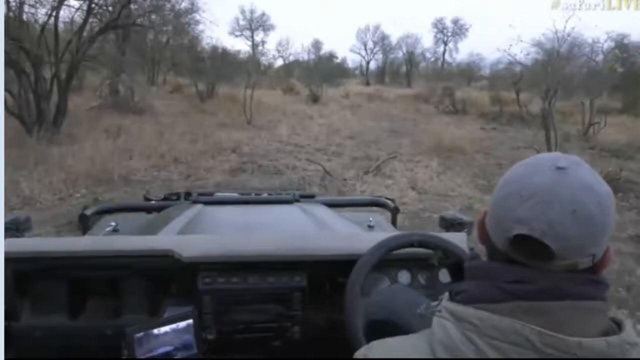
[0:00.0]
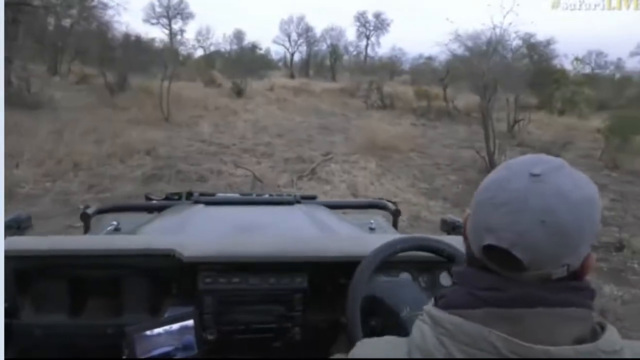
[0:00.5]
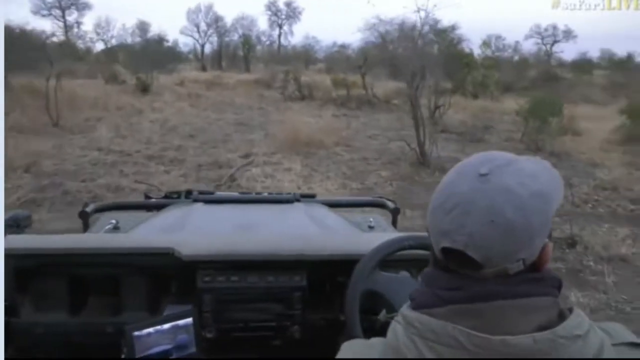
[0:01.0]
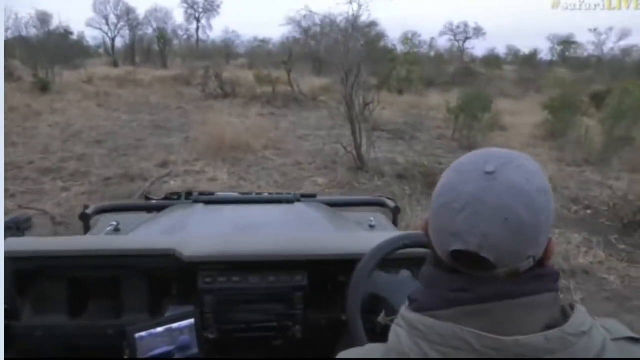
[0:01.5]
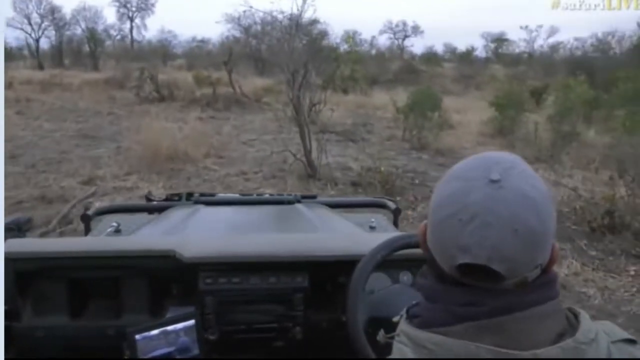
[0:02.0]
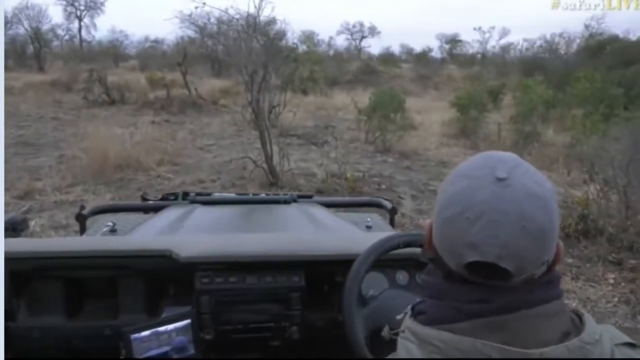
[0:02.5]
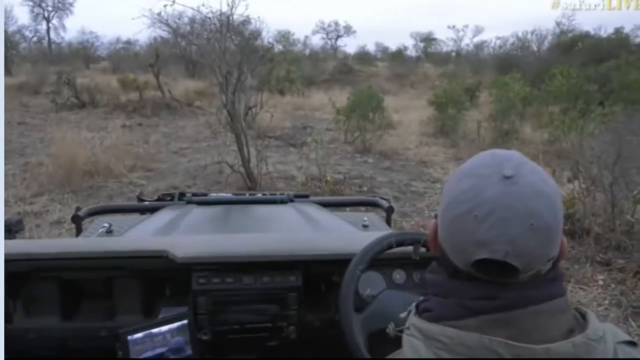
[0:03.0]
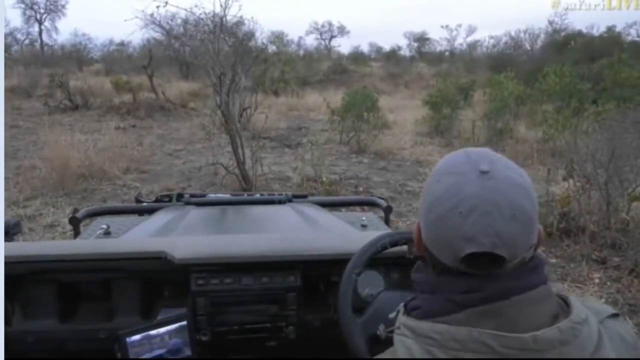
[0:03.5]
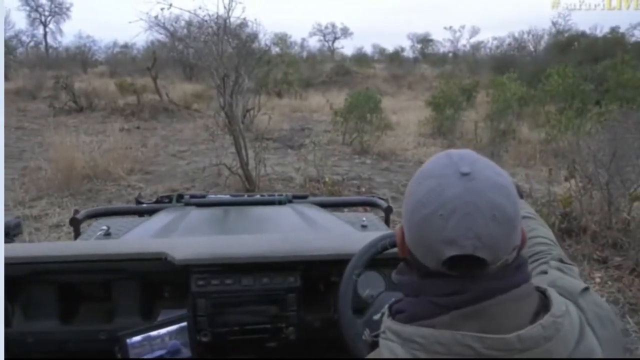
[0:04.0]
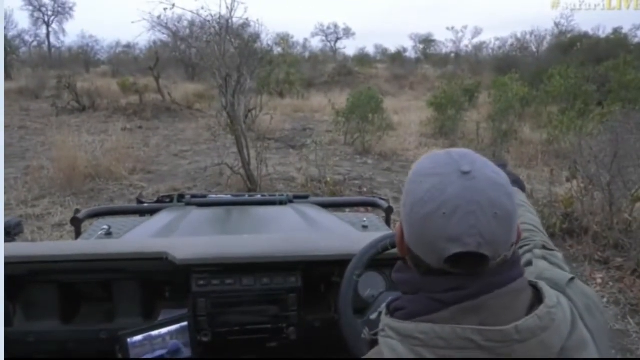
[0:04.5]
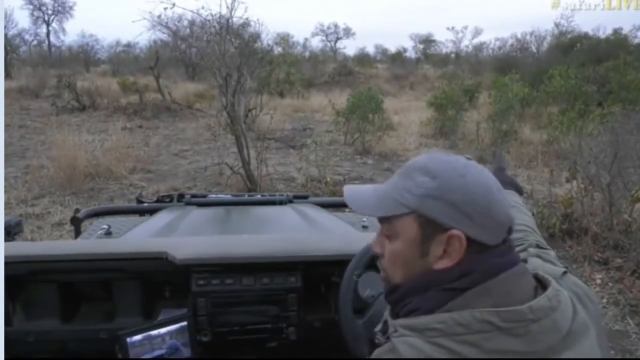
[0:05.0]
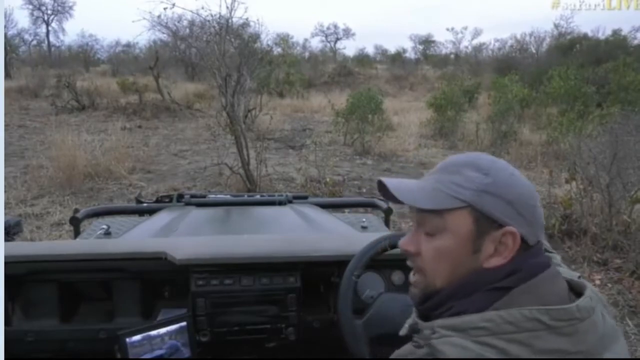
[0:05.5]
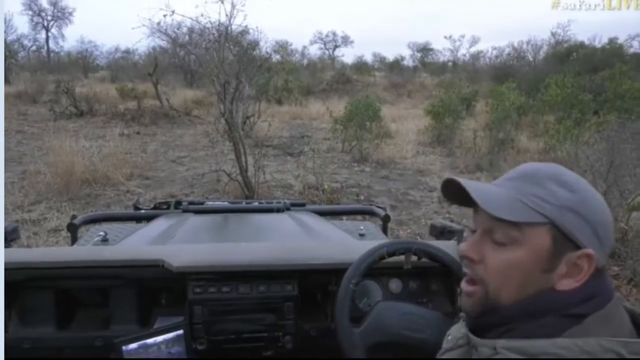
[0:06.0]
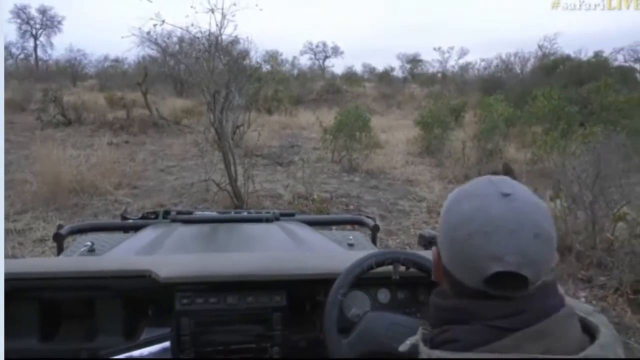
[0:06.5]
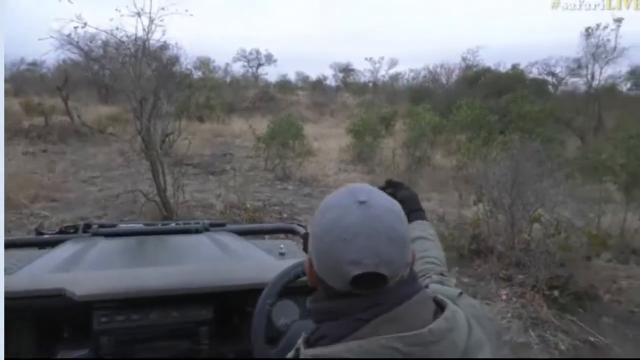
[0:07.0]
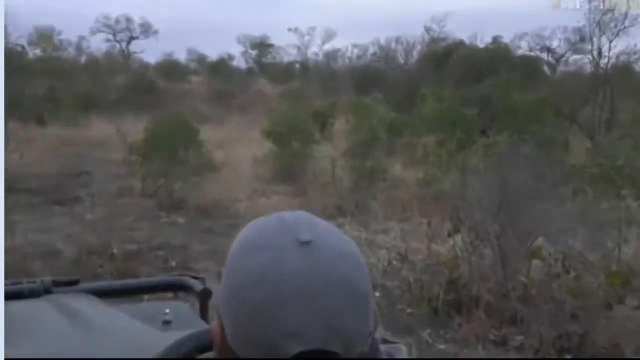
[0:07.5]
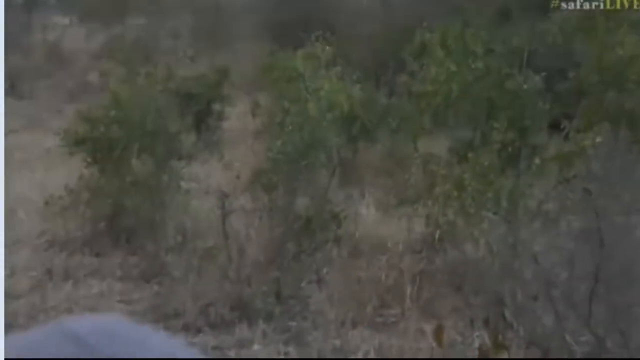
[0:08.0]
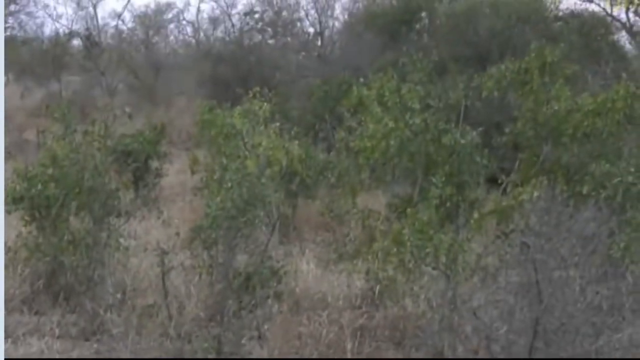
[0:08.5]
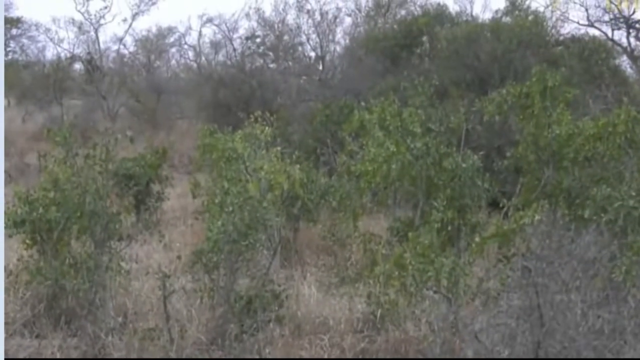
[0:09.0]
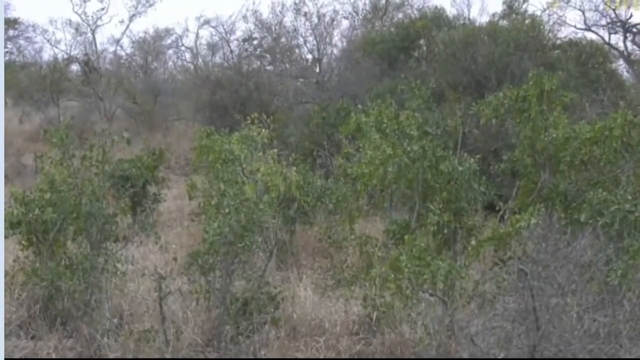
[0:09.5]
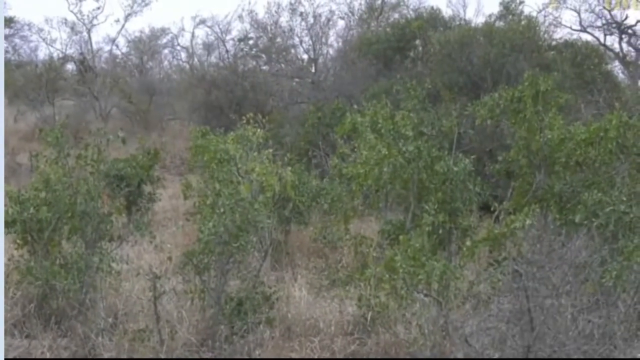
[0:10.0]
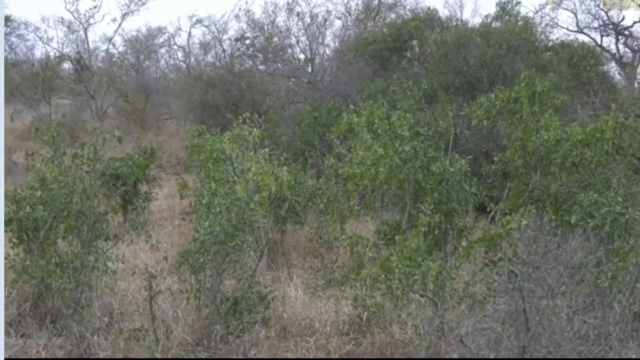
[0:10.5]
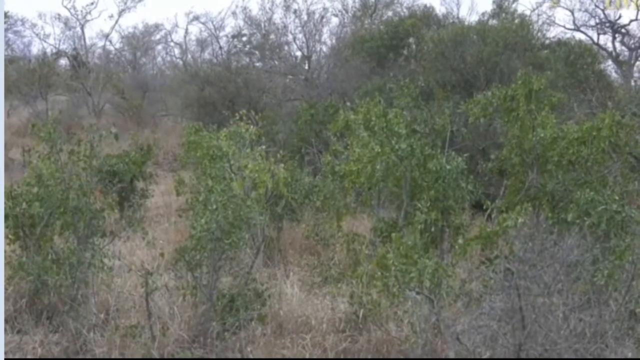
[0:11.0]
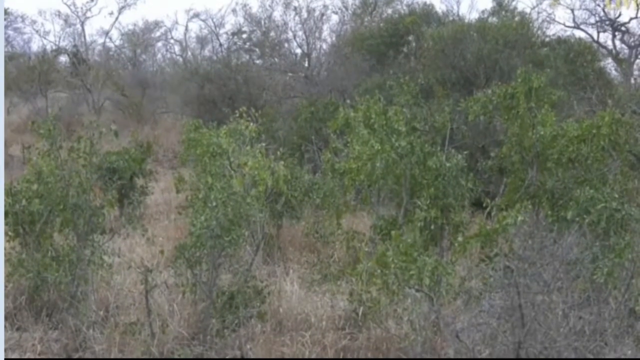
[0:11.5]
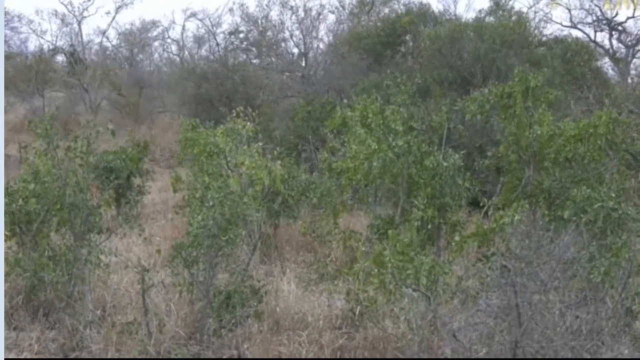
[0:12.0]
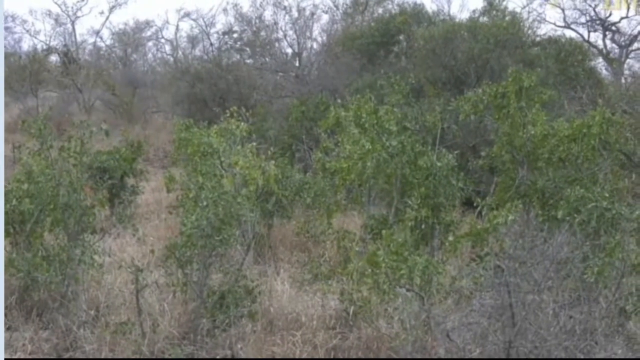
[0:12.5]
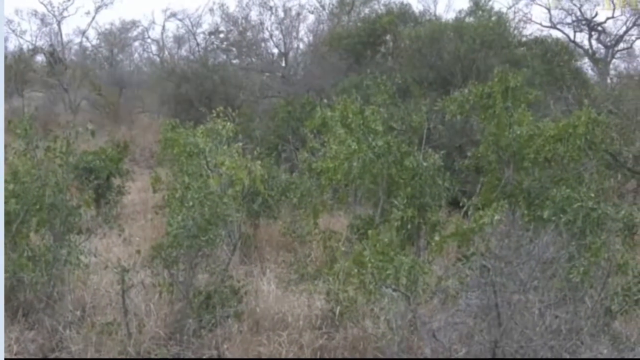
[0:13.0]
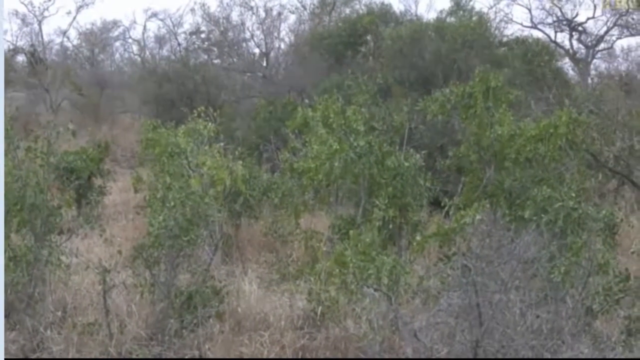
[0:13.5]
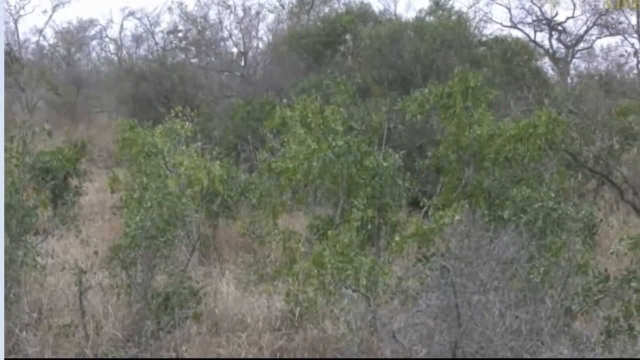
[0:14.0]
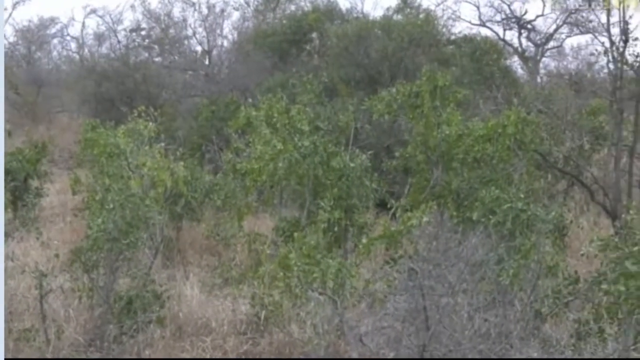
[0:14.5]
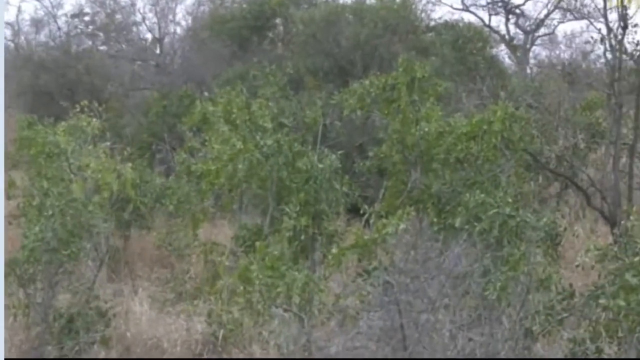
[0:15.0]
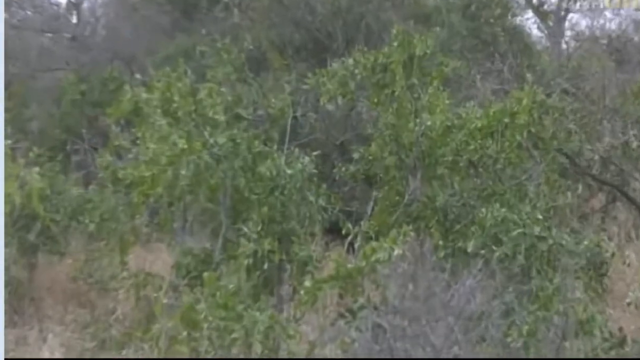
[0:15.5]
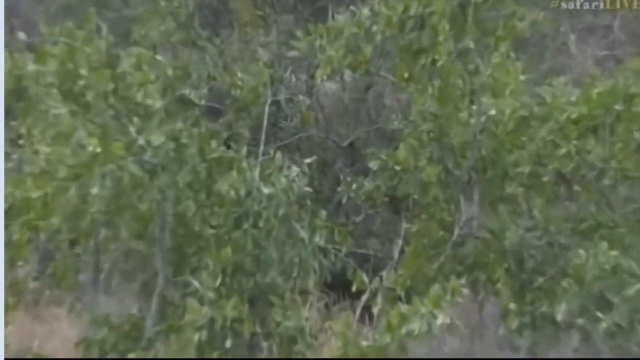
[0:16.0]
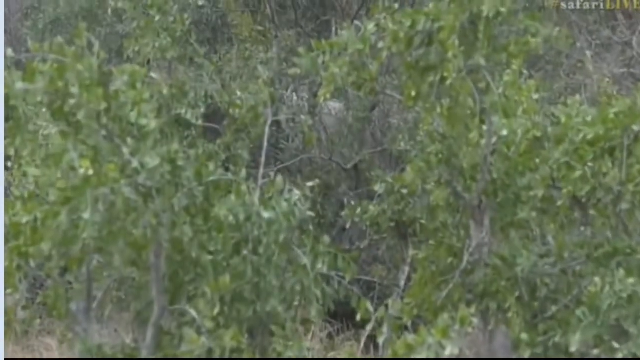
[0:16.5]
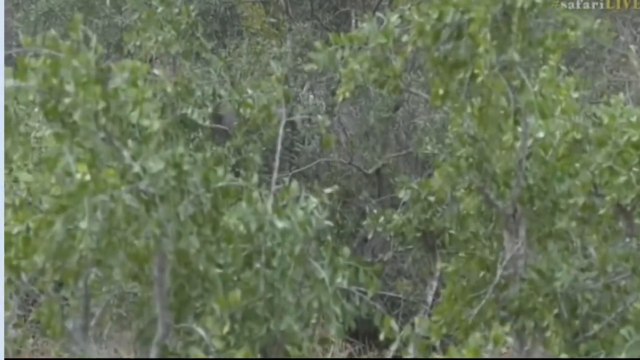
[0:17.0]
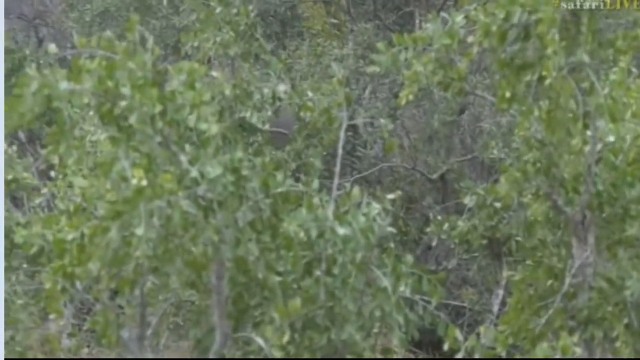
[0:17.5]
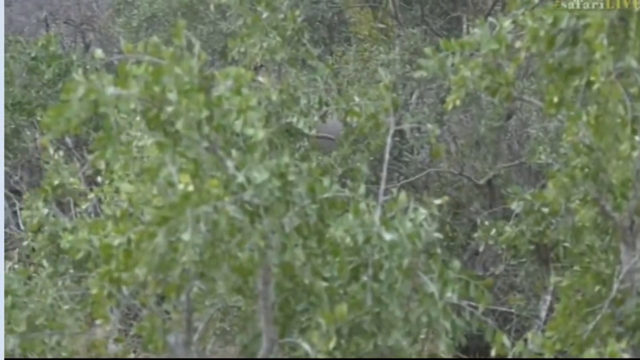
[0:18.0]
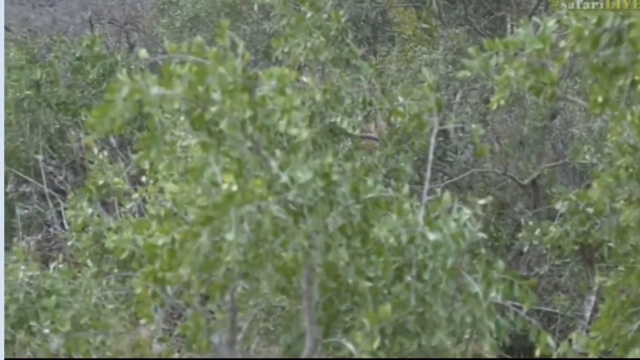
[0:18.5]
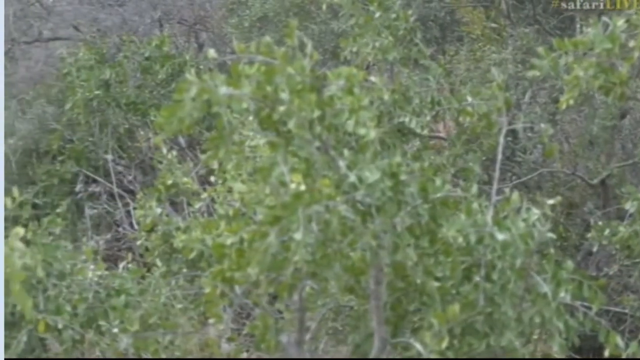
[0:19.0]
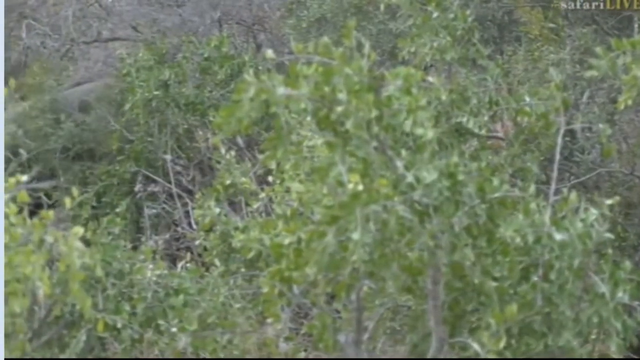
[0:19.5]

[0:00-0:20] A vehicle, apparently a safari vehicle, appears in the bushveld. A white man is driving it, wearing a gray cap, brown gloves and a safari jacket. He turns and looks at the camera. Along the route there are tall trees, some of which seem dry, and the grass also seems dry, possibly because it is the dry season or winter. There are some small green trees in the bush, and behind them there seems to be an elephant. The safari vehicle seems to be open at the back.